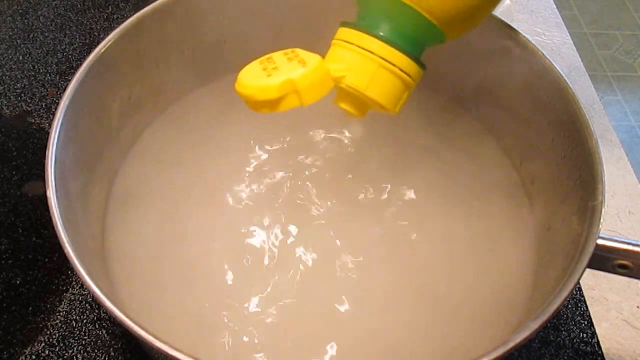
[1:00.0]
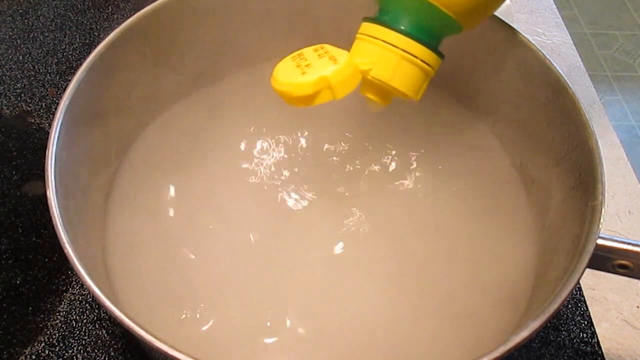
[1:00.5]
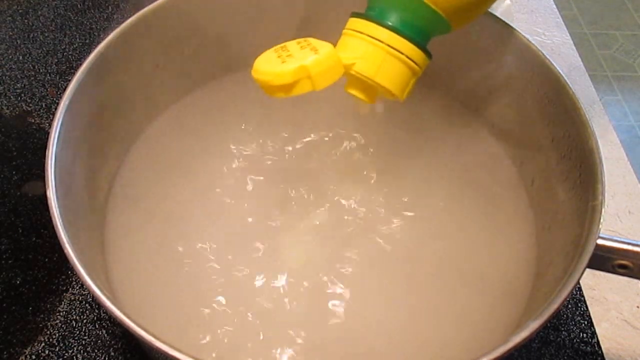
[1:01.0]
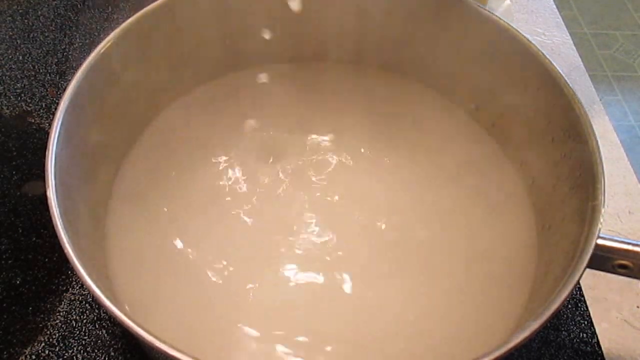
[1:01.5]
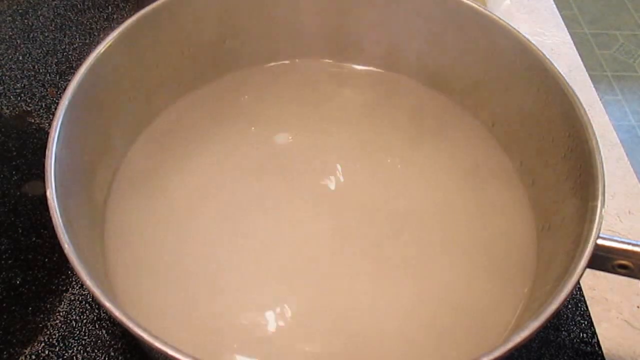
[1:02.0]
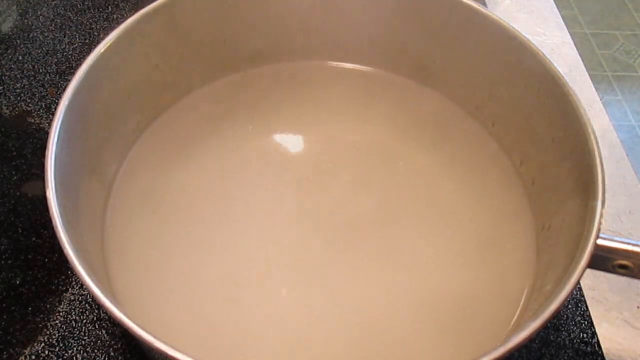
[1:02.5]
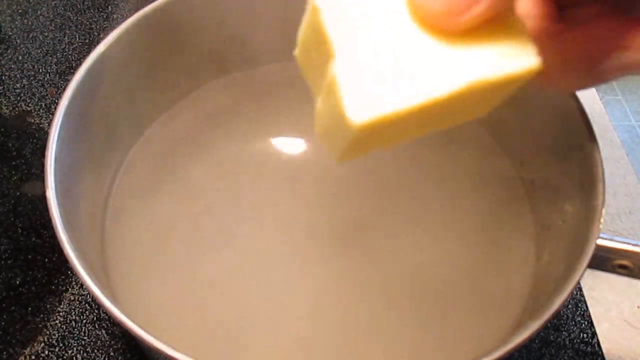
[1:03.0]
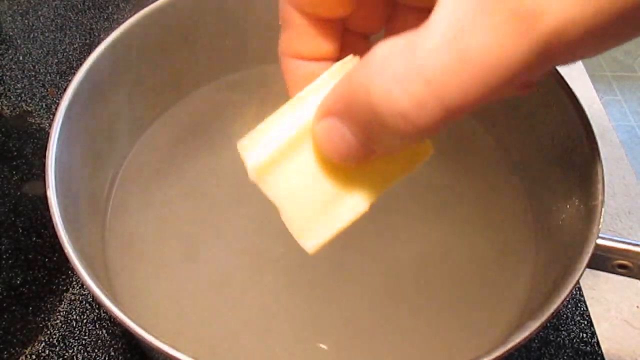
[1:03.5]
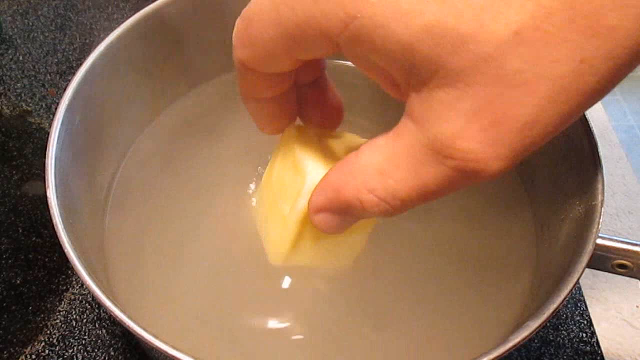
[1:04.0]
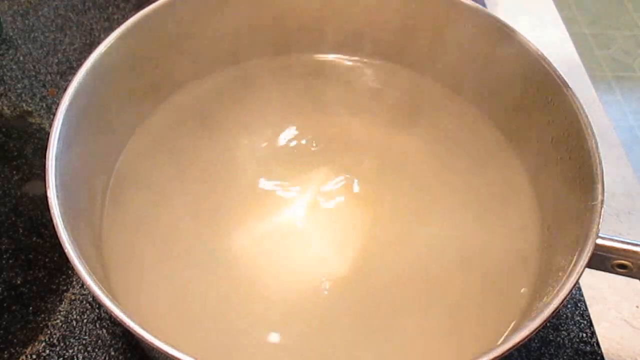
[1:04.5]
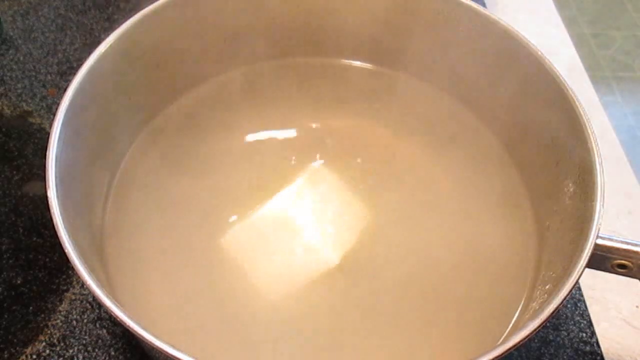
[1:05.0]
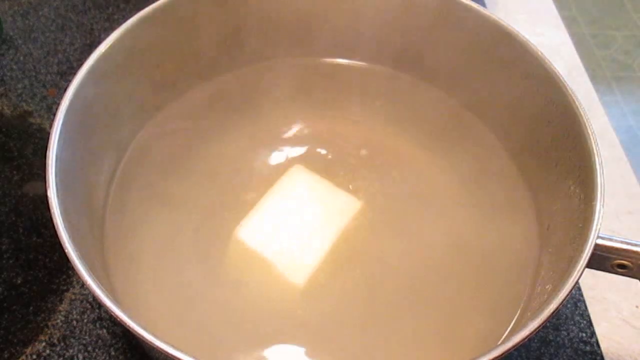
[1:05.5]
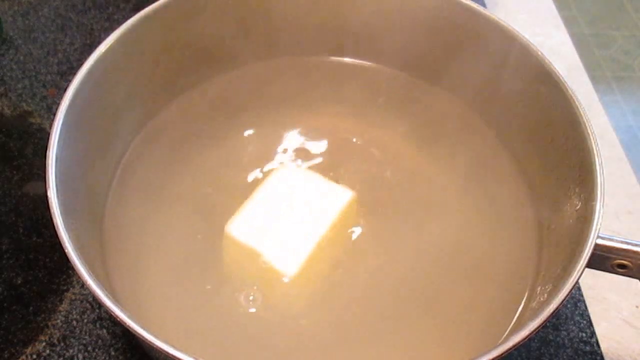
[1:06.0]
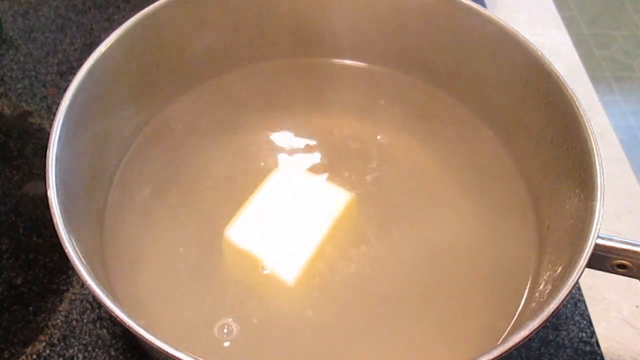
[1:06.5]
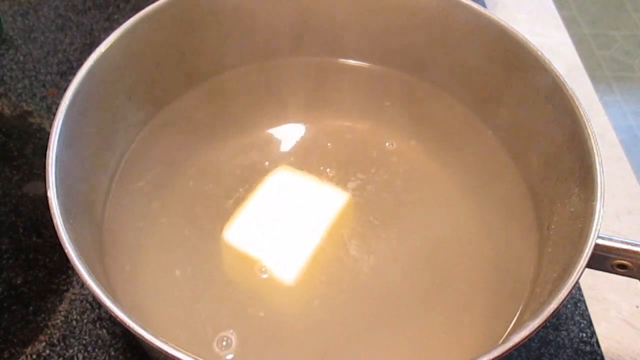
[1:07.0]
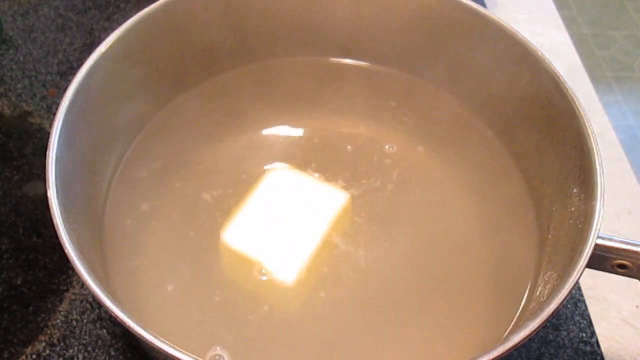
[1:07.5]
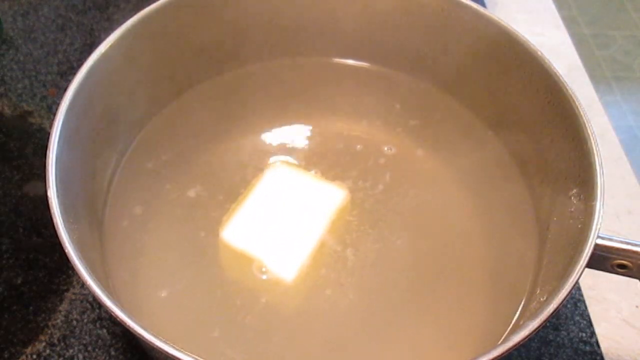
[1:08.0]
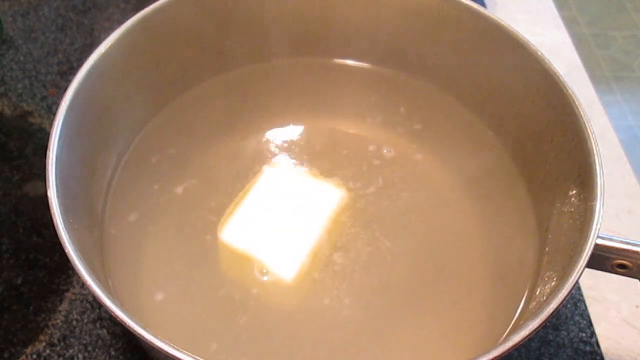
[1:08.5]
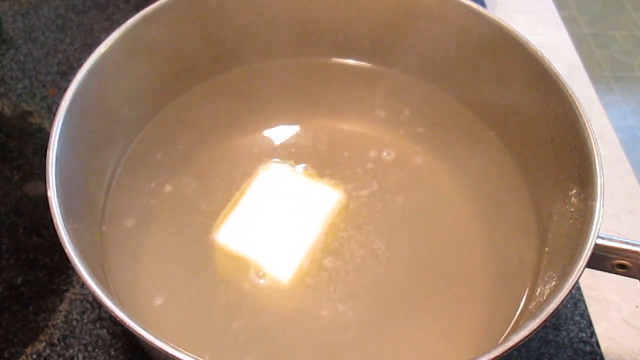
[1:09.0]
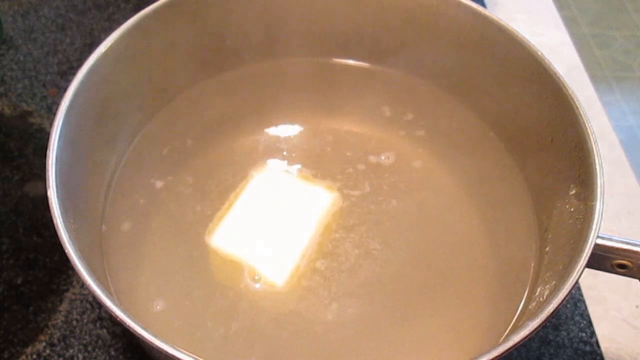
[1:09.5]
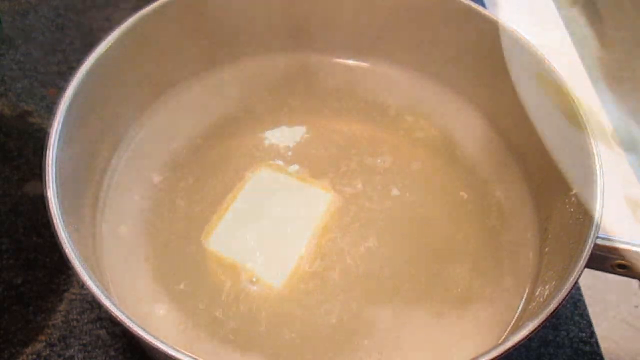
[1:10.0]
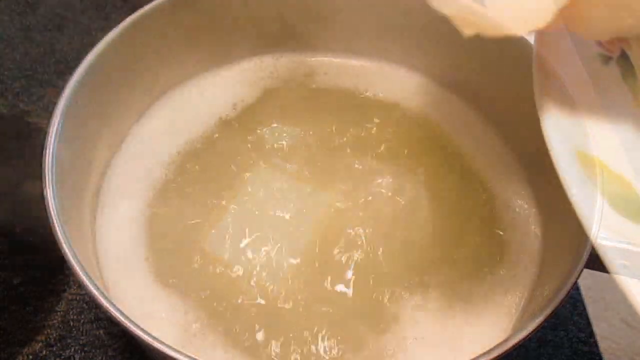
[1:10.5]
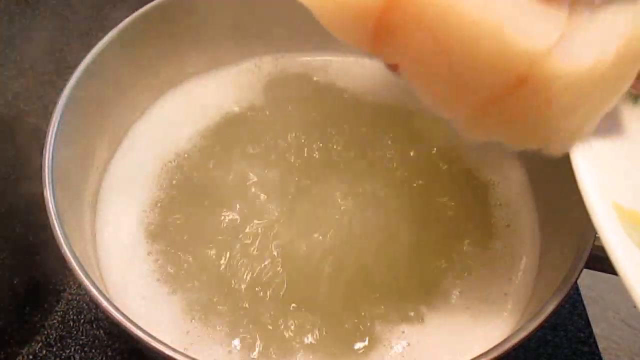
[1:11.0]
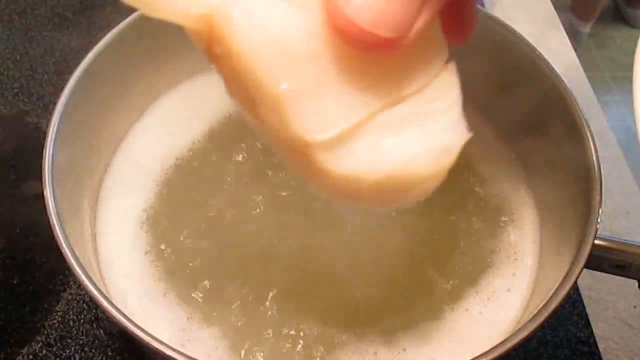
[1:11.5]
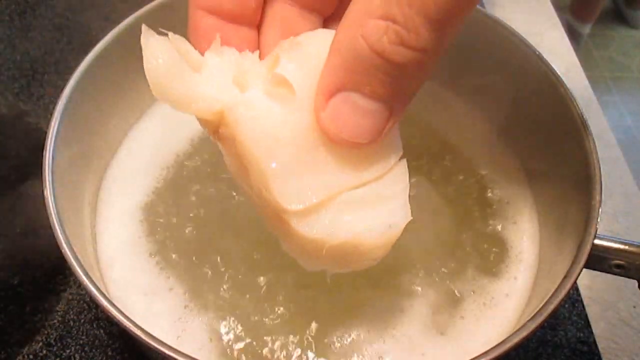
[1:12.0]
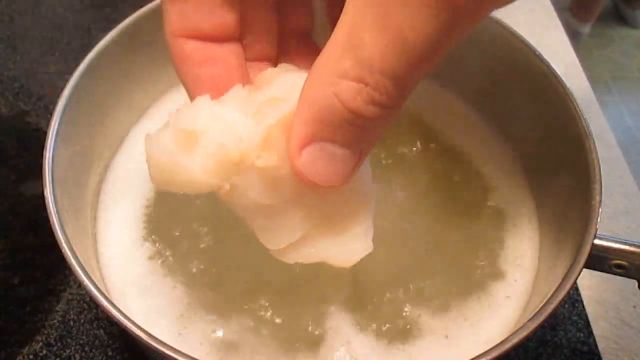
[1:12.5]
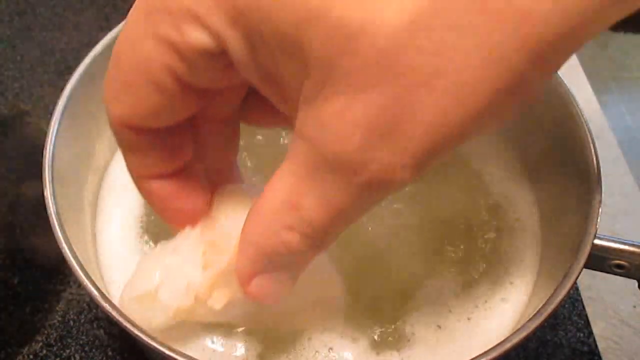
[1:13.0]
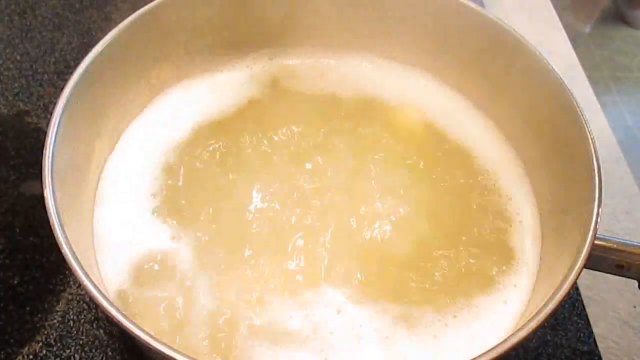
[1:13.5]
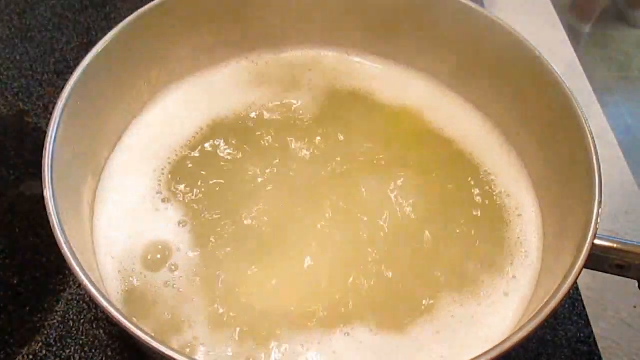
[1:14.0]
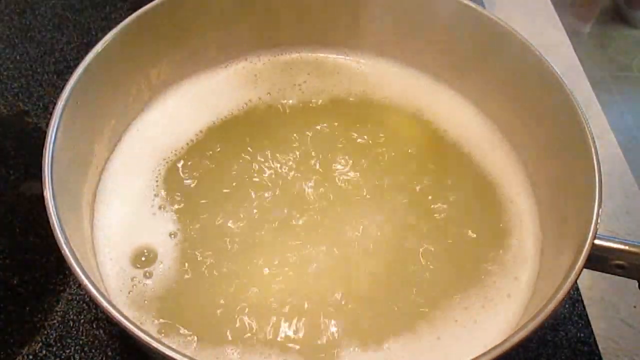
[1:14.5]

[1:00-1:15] The pot holds the water with the added ingredients, including the couple of drops of lemon juice. The hand drops in about two tablespoons of a solid butter stick, apparently cut, maybe about a fourth of the stick. The pot is brought to a rolling boil, and the butter has melted, leaving foam along the edges. The hand reappears holding a piece of the cut fish, with a plate holding the fish in the other hand, and drops the first piece into the boiling liquid. Shortly after, the hand returns with a second piece over the boiling water and places it in carefully so the water does not splatter.